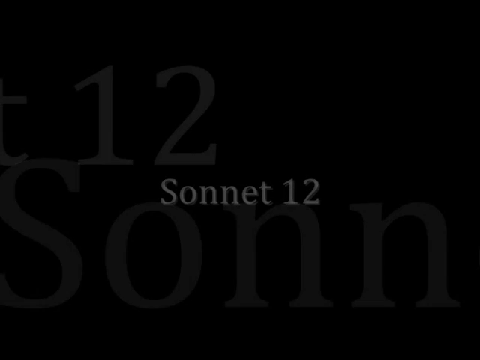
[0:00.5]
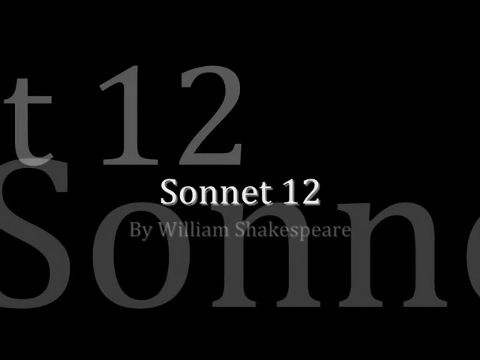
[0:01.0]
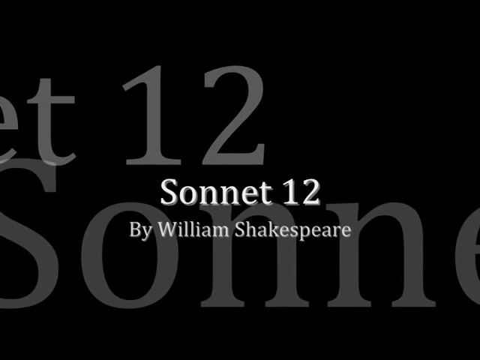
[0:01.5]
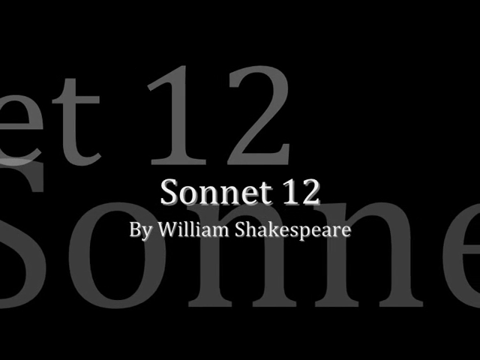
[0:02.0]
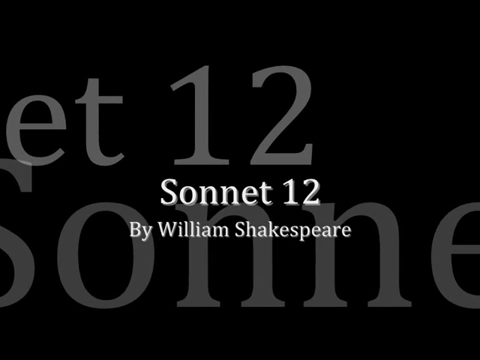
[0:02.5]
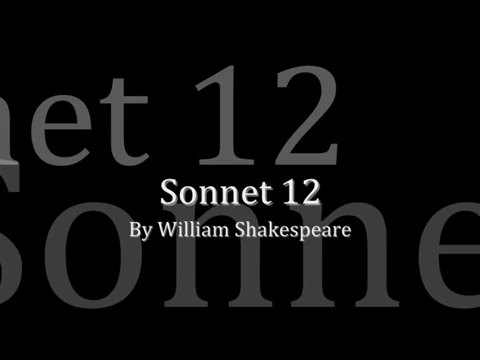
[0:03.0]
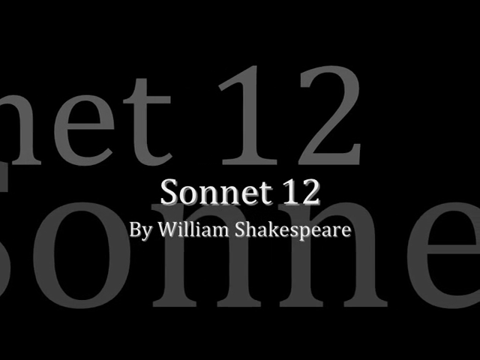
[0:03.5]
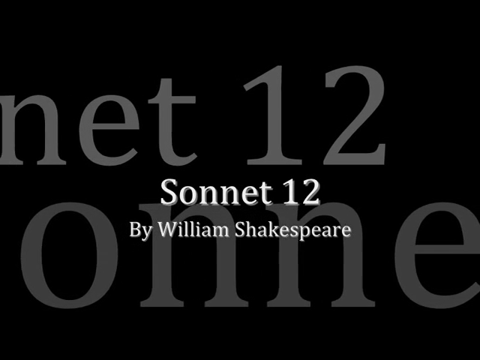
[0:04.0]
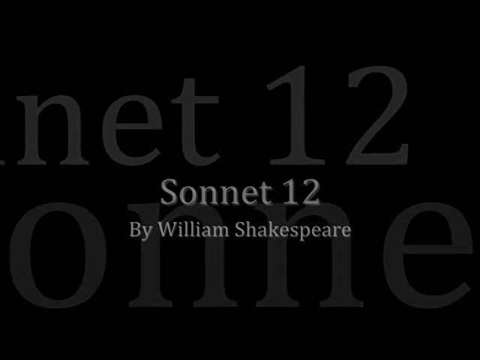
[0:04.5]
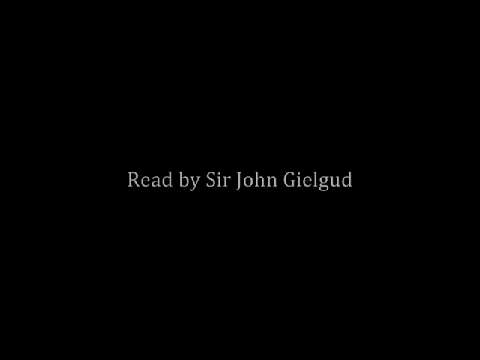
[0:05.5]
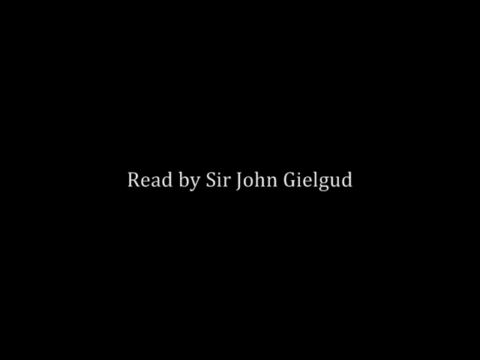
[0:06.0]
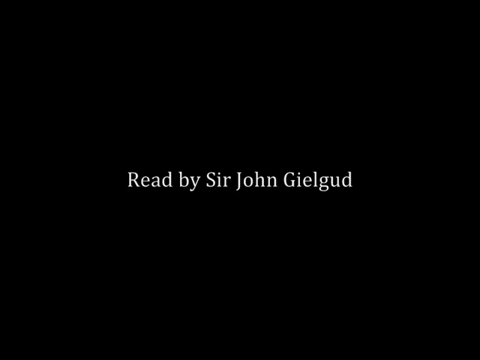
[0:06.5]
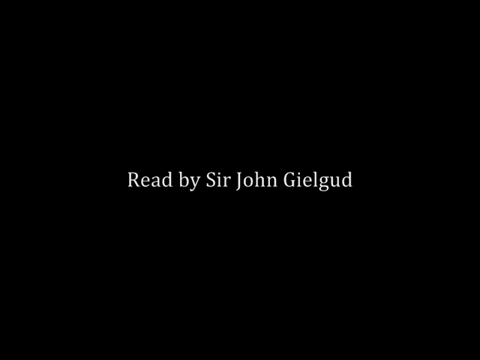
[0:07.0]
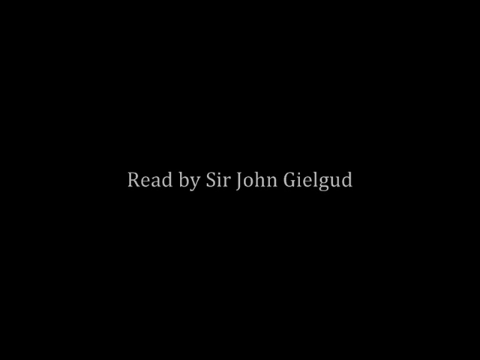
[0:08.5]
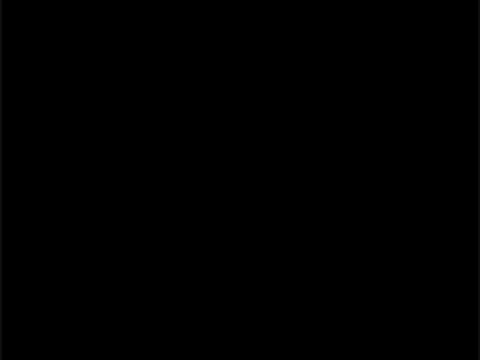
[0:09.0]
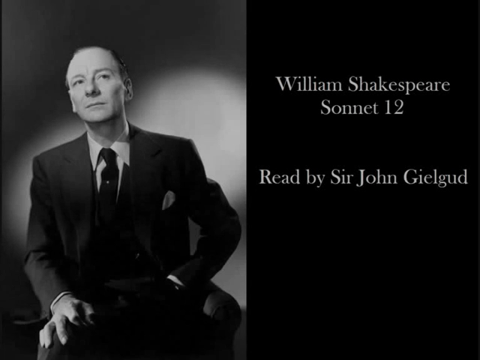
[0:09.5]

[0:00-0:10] The video opens on a black background that quickly gains subtitles. Smaller white subtitles in the middle read "Sonnet 12 by William Shakespeare", and bigger grey subtitles are behind the smaller white ones. The view then changes to black with a white subtitle reading "read by Sir John Gielgud". Next the screen splits in two: the right side shows the "read by Sir John Gielgud" information, and the left side shows a photo of a middle-aged, aristocratic, elegant man, apparently Sir John himself. He is sitting in an armchair, wearing a suit with a tie, and looking up. He is apparently about to read an audiobook or radio drama.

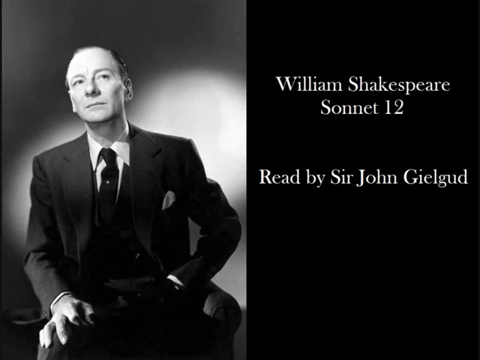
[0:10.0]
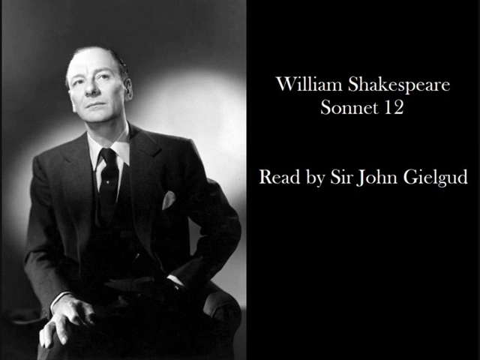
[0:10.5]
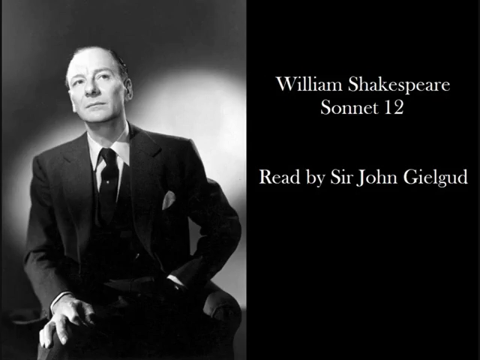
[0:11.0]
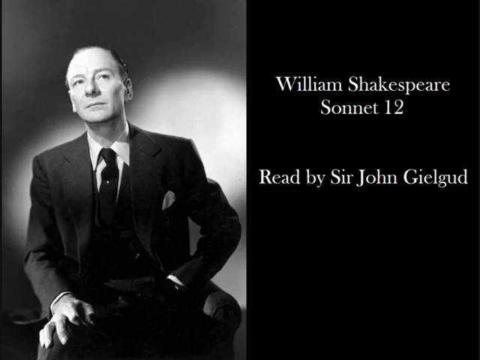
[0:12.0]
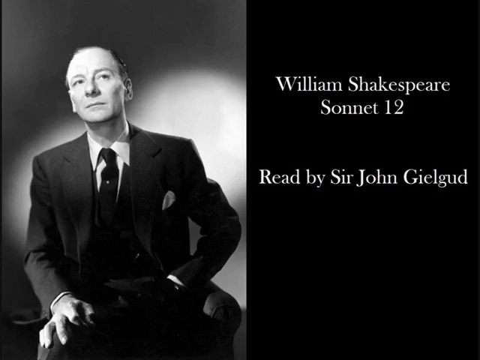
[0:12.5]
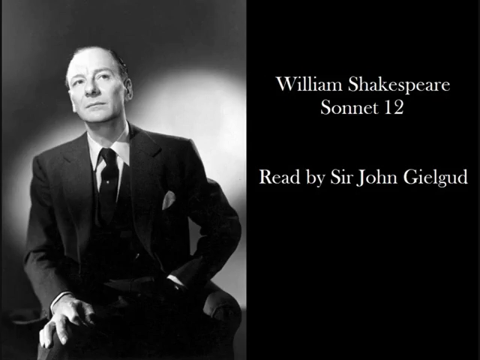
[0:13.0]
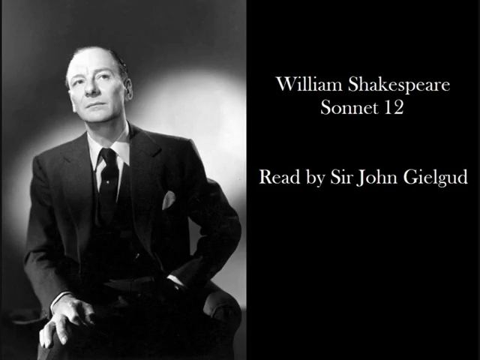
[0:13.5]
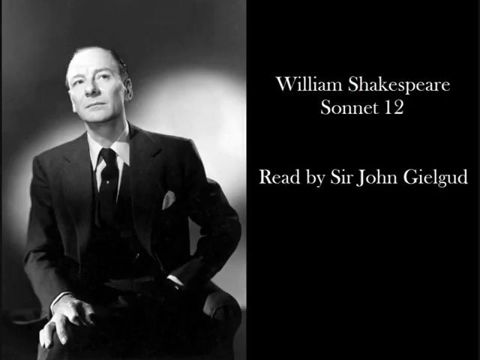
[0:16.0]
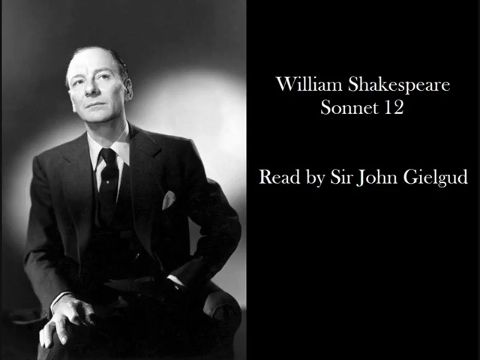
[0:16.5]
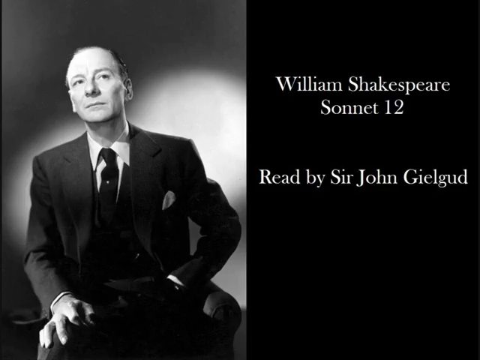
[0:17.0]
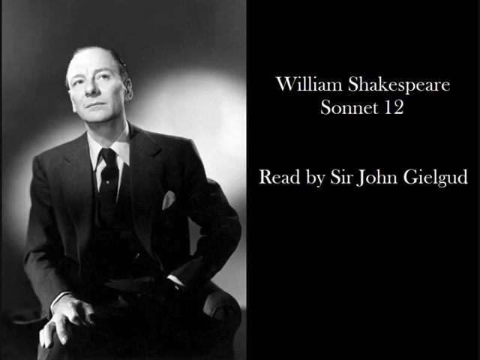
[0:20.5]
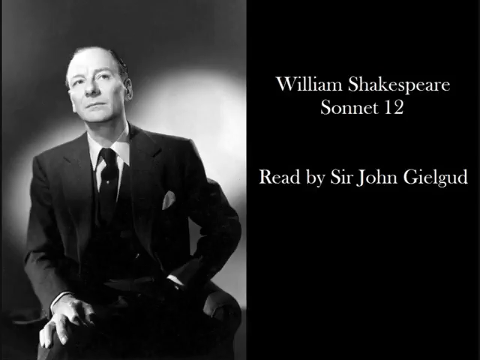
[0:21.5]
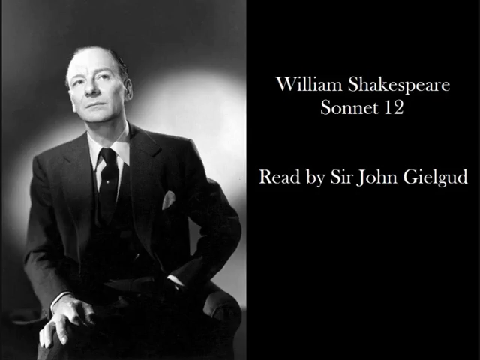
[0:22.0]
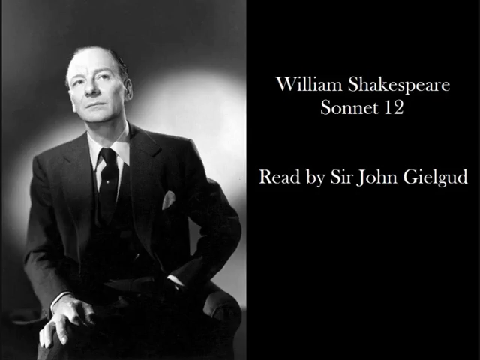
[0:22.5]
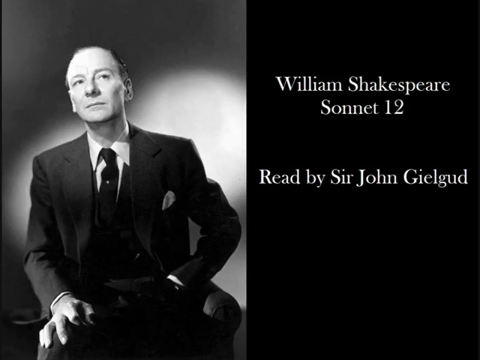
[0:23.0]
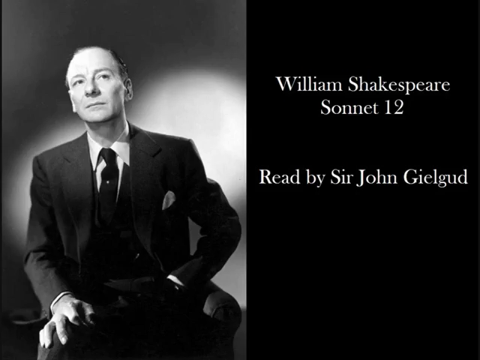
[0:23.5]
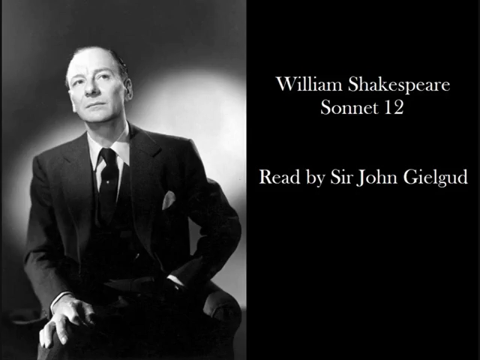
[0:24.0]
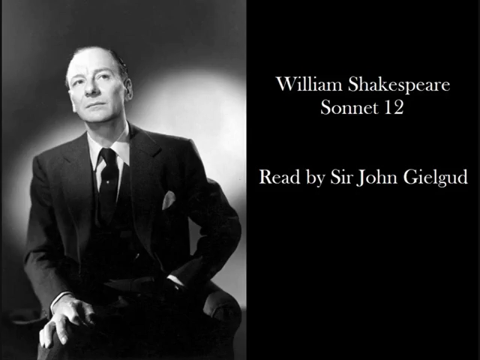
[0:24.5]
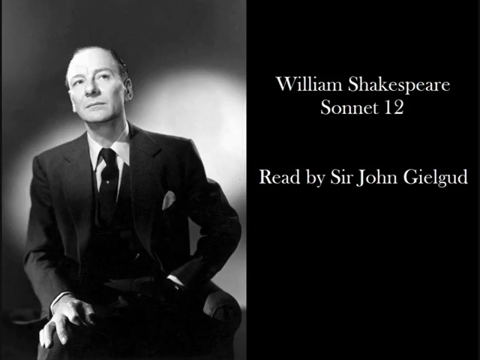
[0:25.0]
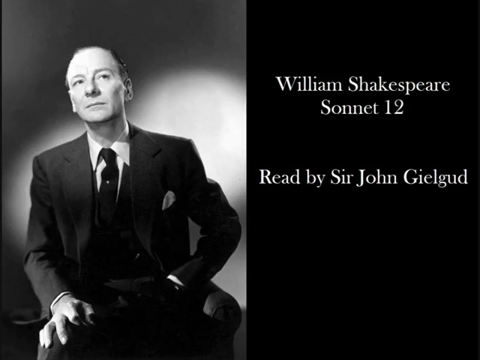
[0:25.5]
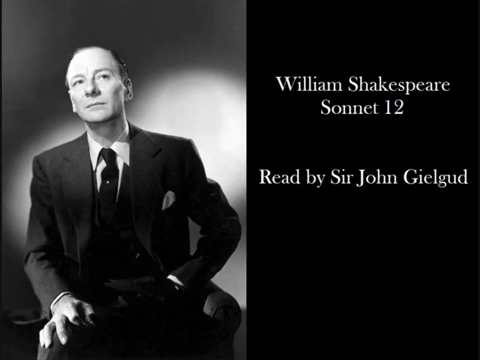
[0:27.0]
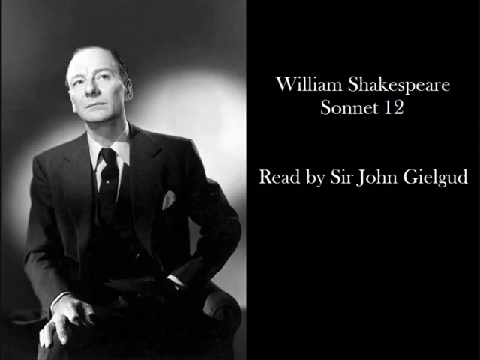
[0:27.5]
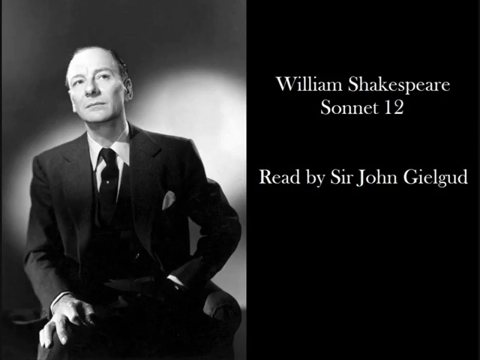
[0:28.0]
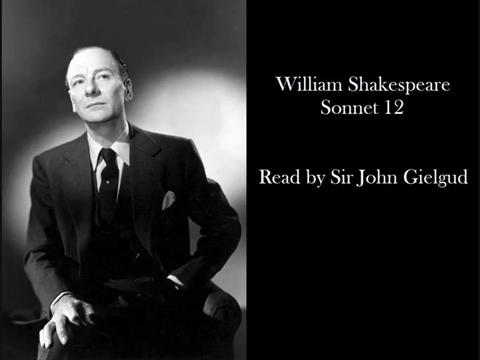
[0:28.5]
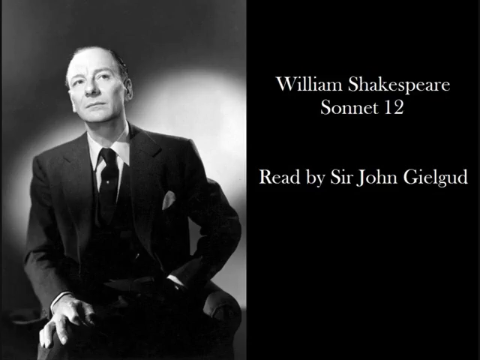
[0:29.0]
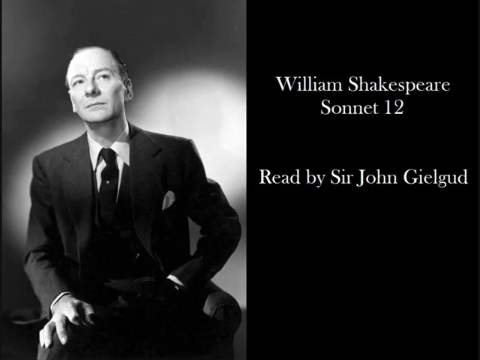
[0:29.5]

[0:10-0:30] The split screen stays the same throughout, with nothing moving or changing. On the right is a black background with subtitles reading "William Shakespeare sonnet 12 read by Sir John Gielgud". On the left is a black and white photo of a man, apparently Sir John, sitting in an armchair and wearing a suit with a tie and tissue. His left hand is in his pocket and his right hand is on his knee. He seems to be looking up, giving a slightly dramatic look with a little smile. He is middle-aged and starting to go bald. Two theatrical lights in the background are lighting him. He has a charismatic, aristocratic and theatrical look, like a Shakespearean actor, and he is apparently about to read William Shakespeare's Sonnet 12 as an intro.